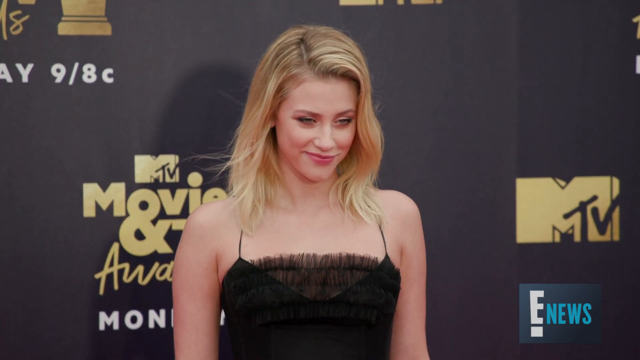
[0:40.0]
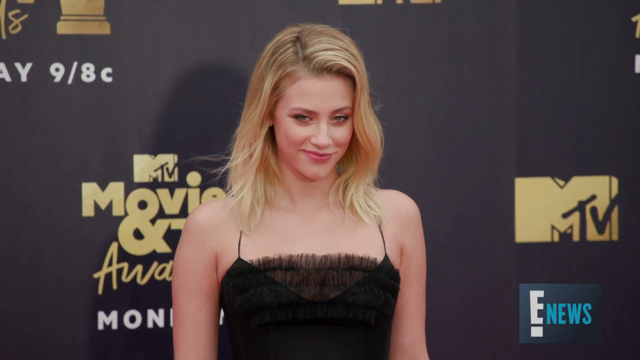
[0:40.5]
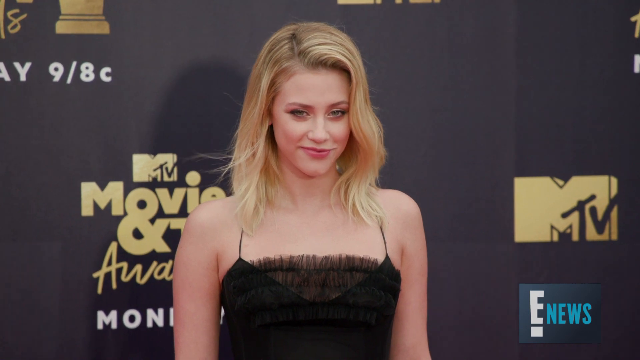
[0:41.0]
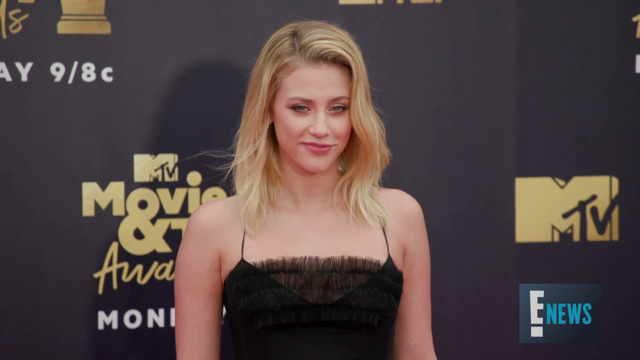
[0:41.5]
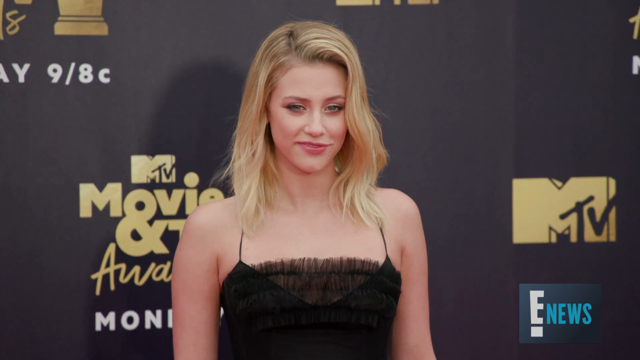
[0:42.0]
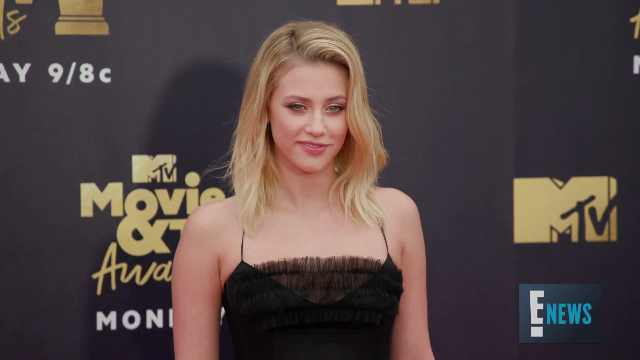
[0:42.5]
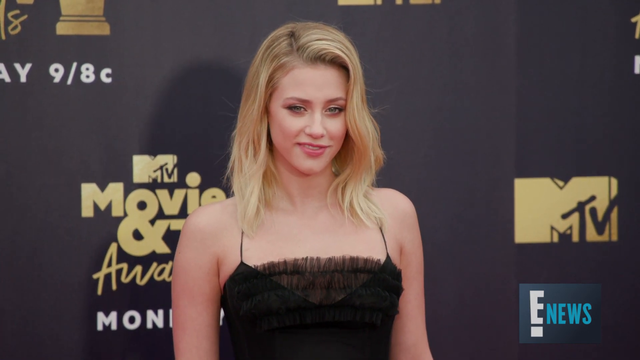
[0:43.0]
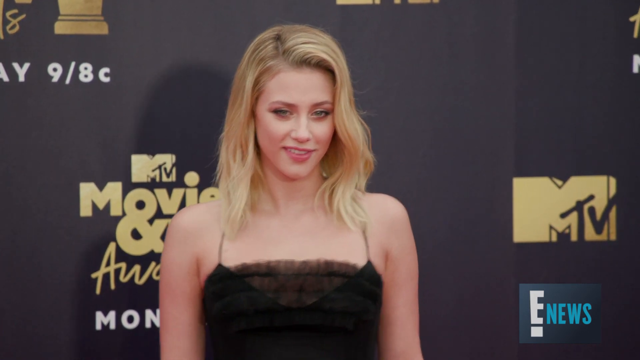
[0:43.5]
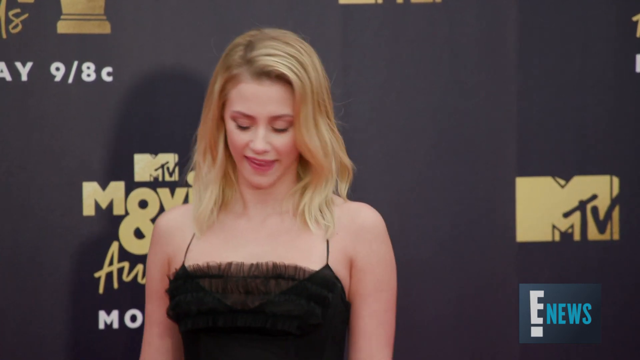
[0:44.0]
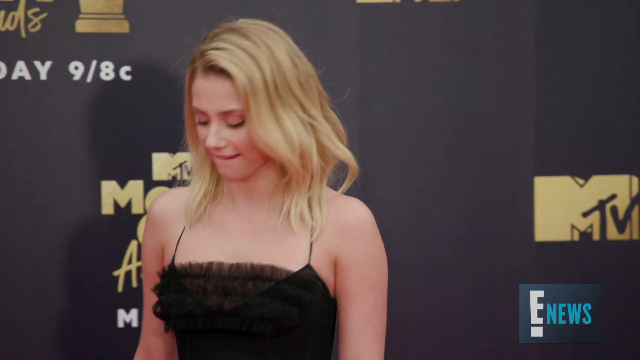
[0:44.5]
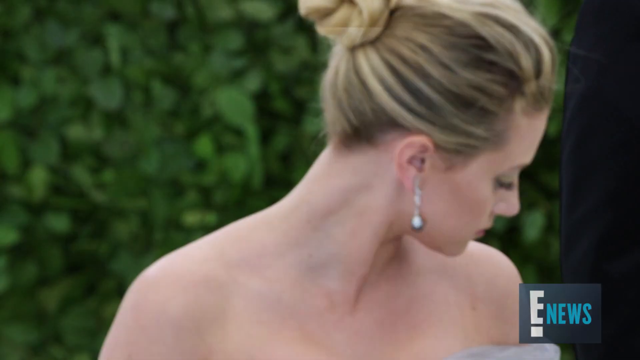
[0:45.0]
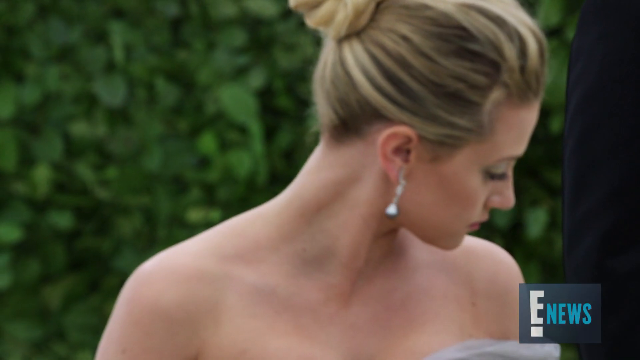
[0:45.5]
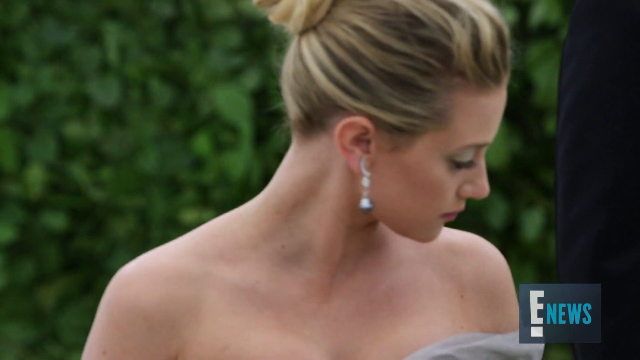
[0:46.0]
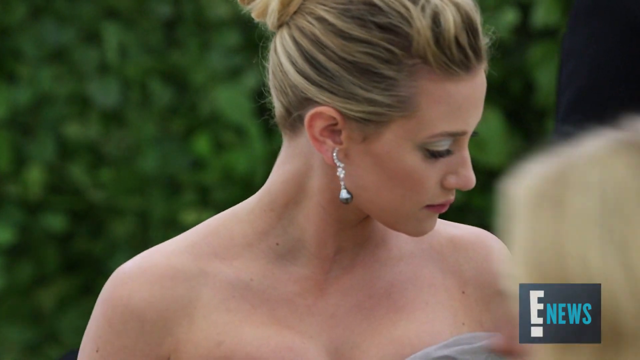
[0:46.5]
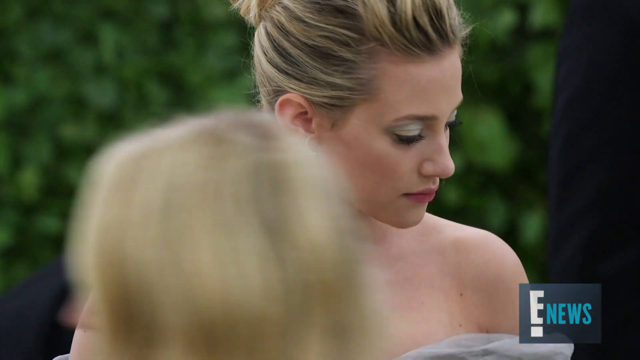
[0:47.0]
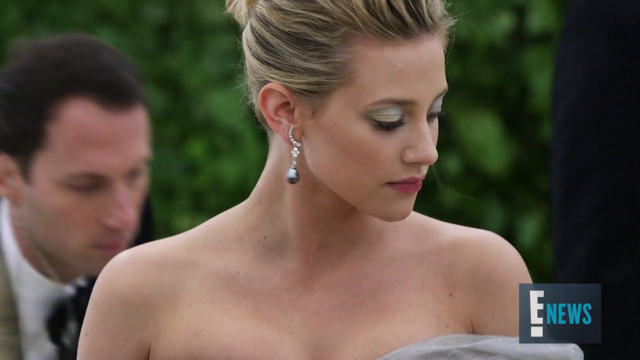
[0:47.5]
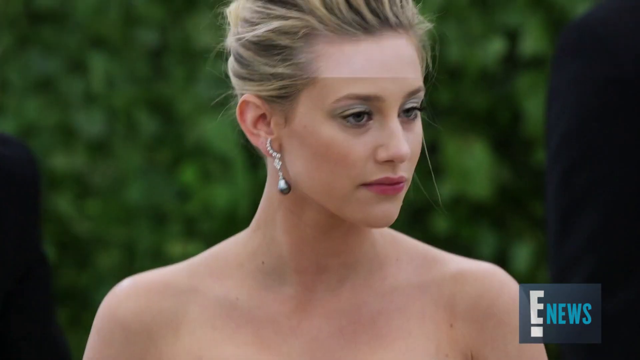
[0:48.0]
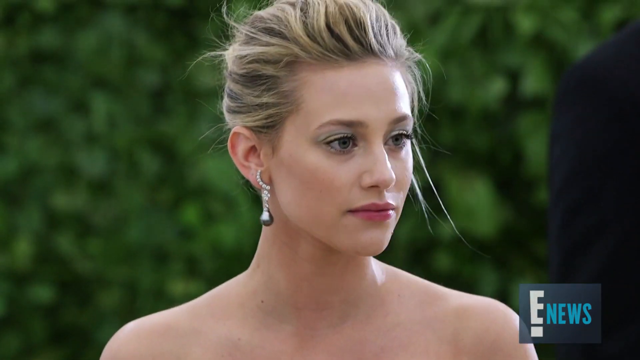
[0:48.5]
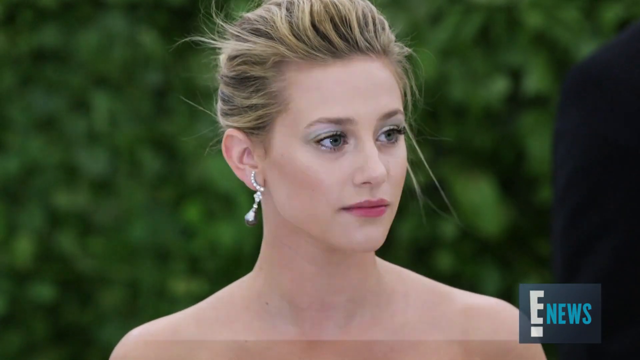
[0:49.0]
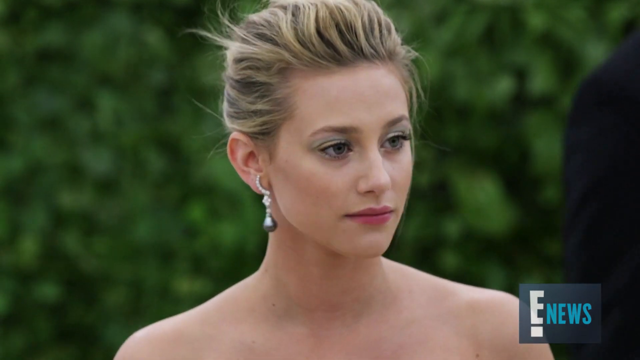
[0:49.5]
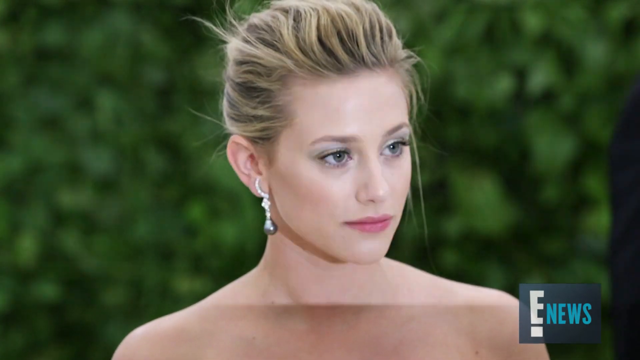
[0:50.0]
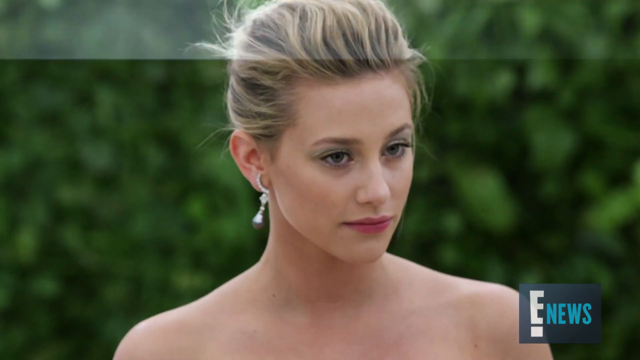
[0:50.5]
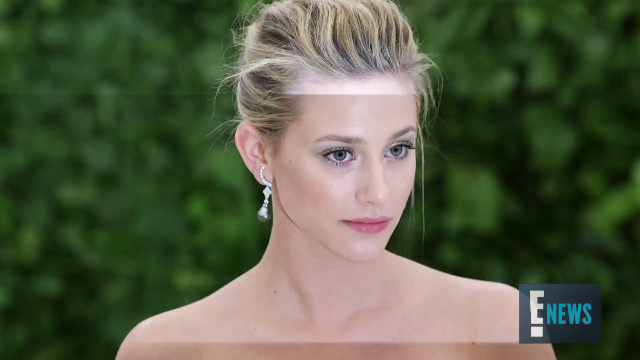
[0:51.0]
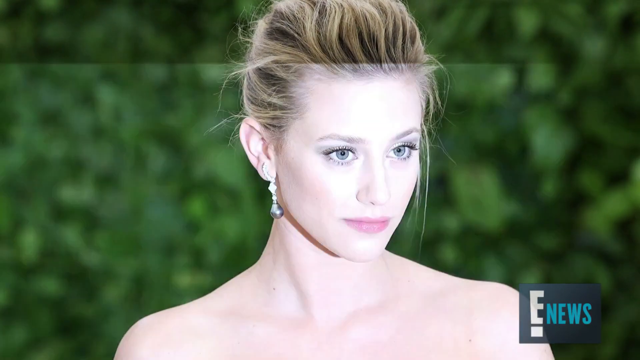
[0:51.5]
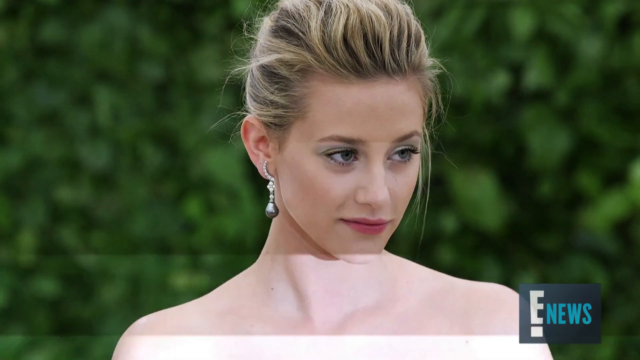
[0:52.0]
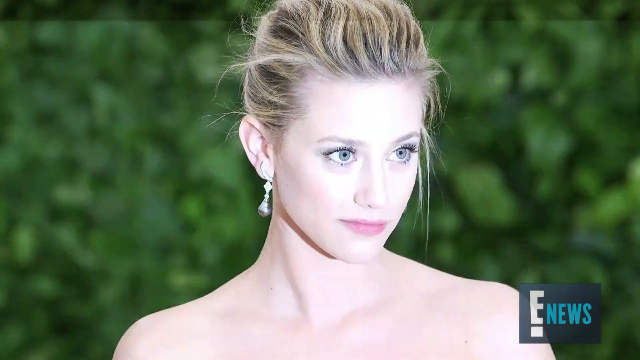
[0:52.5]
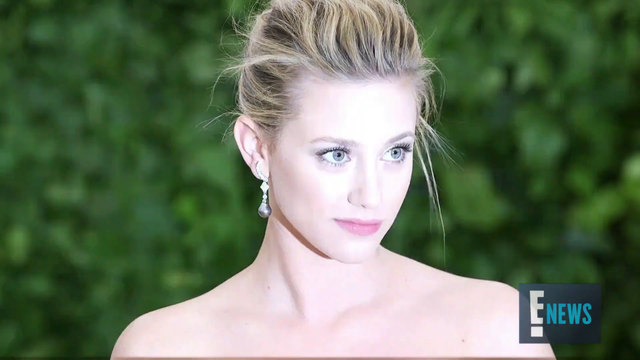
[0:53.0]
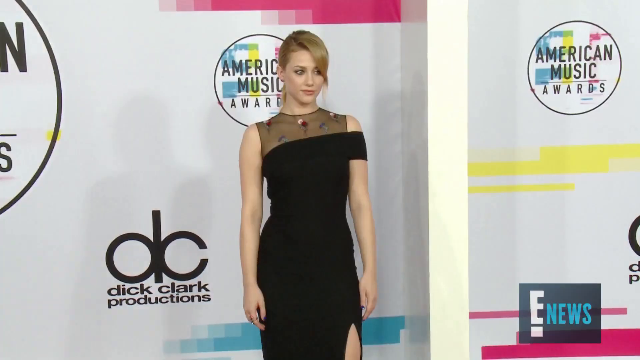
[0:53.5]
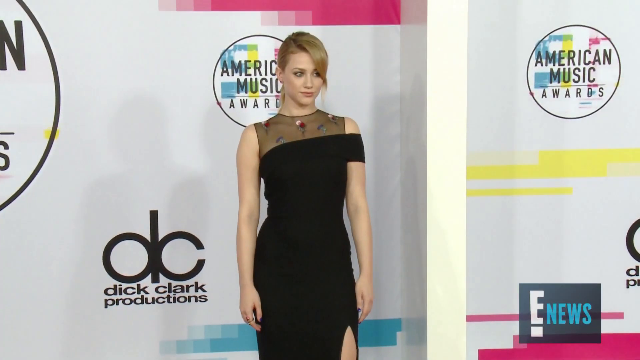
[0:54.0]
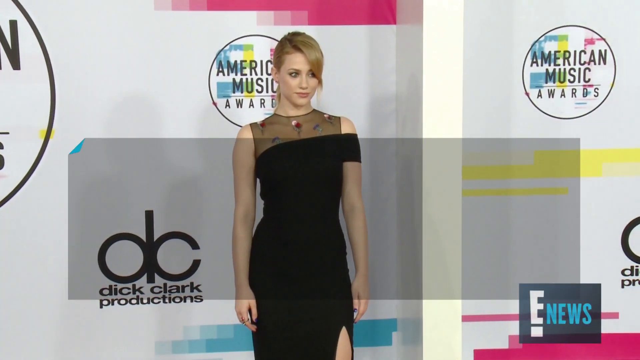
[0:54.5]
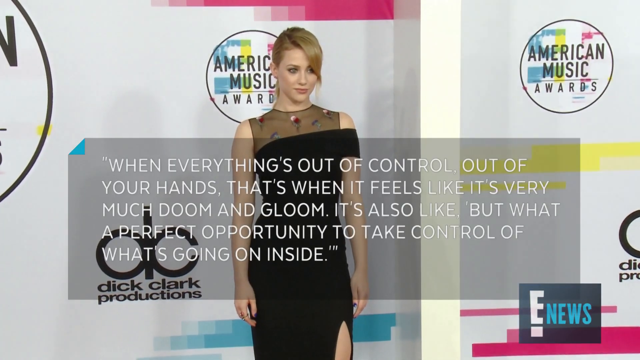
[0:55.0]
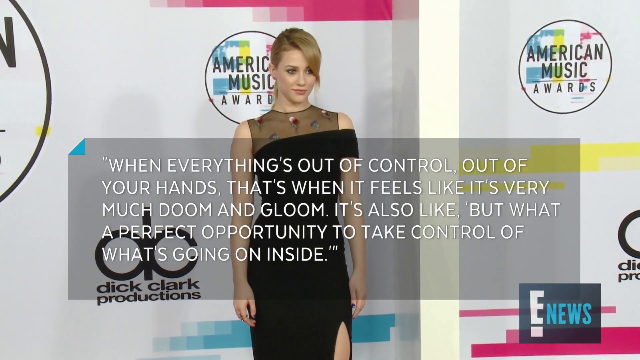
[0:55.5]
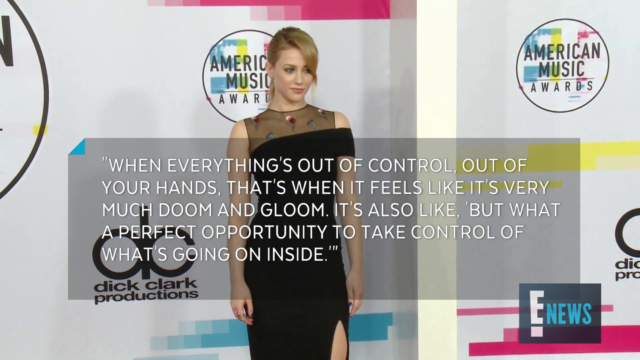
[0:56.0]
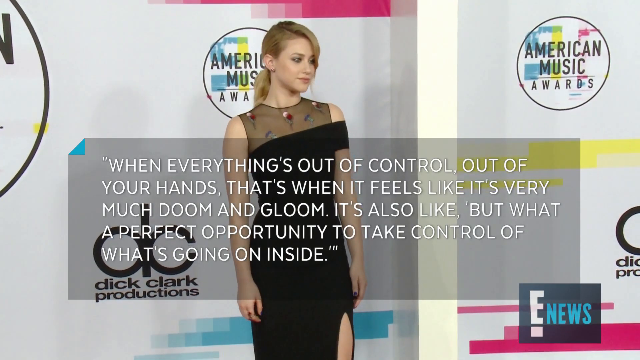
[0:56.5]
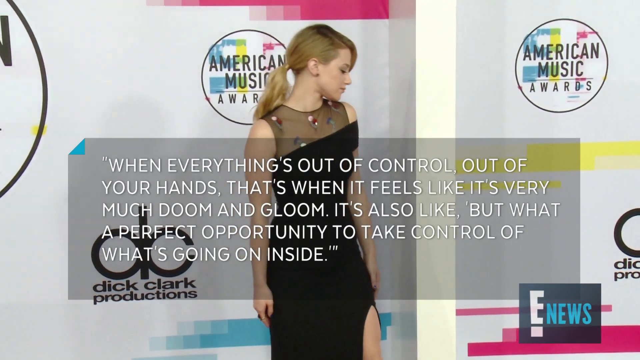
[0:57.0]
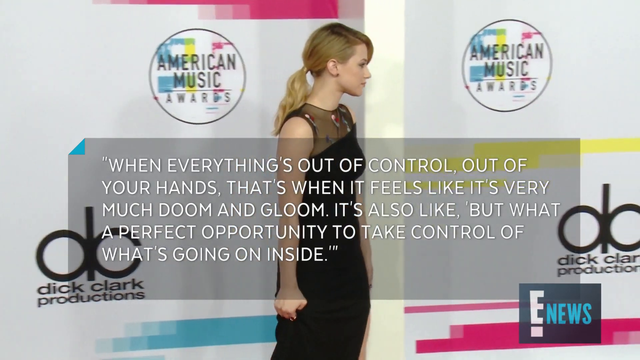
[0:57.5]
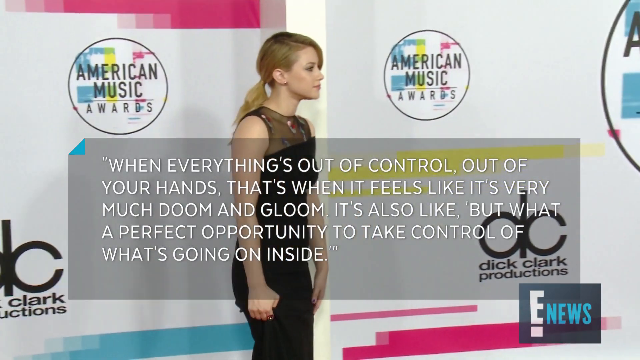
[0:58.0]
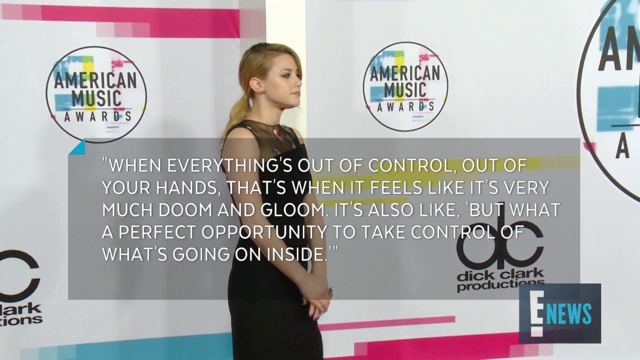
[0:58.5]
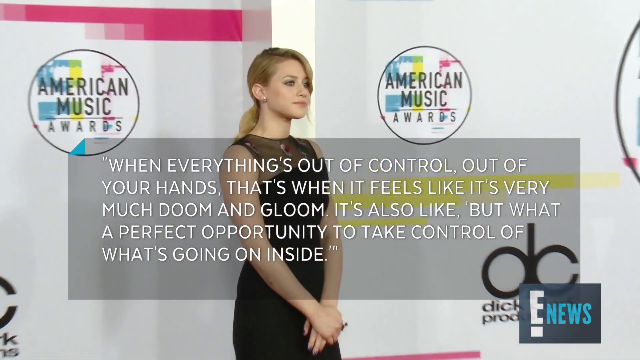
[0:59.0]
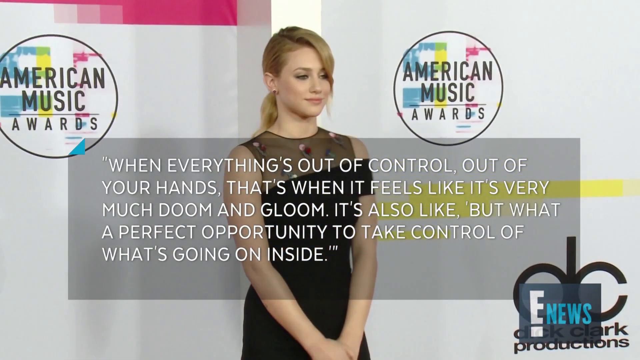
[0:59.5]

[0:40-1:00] She wears a black dress with thin spaghetti straps, her longer blonde hair combed over to the side. She stands in front of a black wall with gold MTV logos, possibly at the MTV Movie Awards. Another image shows a photographer taking pictures of her. Video of her at the American Music Awards follows, with the logos in white behind her; she wears a black dress that kind of hangs off of one sleeve. Quotes from her read "when everything's out of control, out of your hands, it's when it feels like it's very much doom and gloom. It's also like, but what a perfect opportunity to take control of what's going on inside."